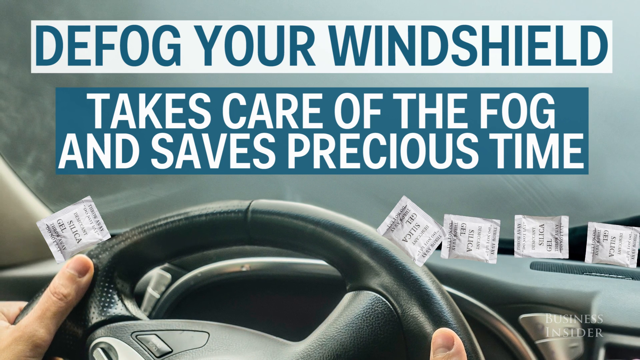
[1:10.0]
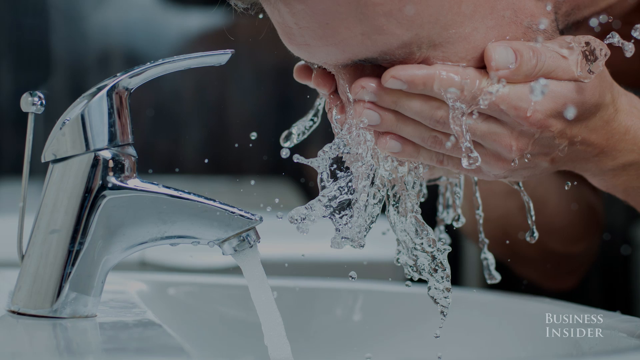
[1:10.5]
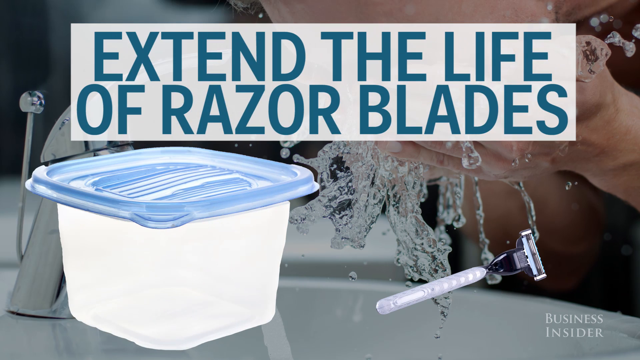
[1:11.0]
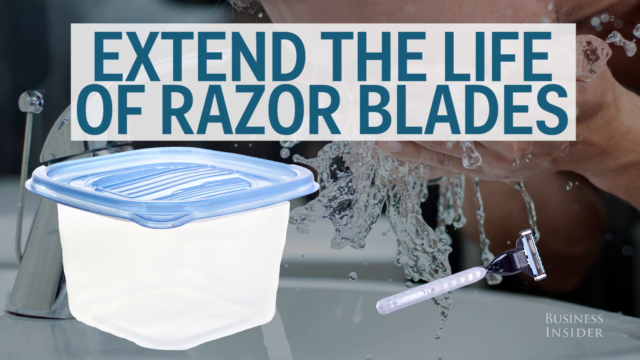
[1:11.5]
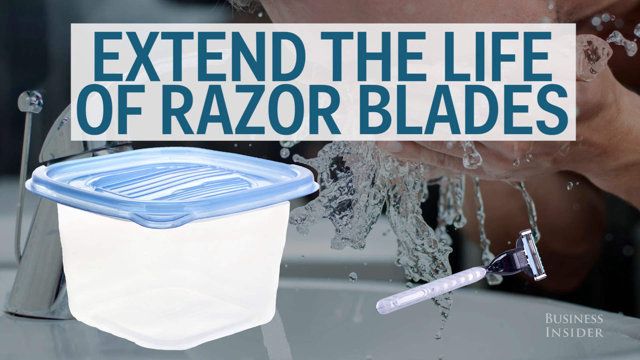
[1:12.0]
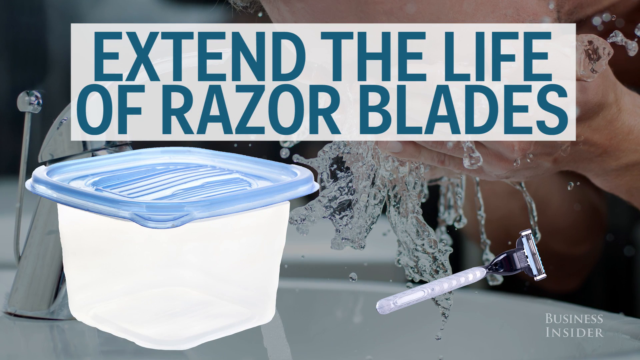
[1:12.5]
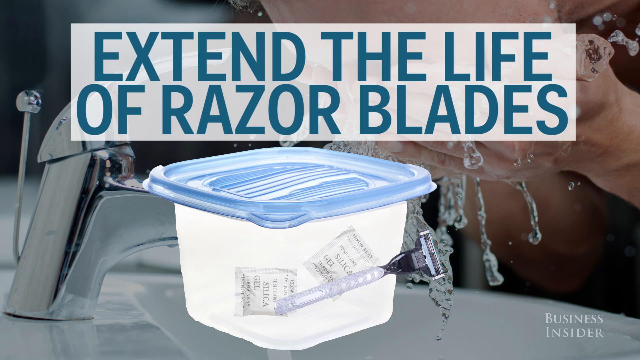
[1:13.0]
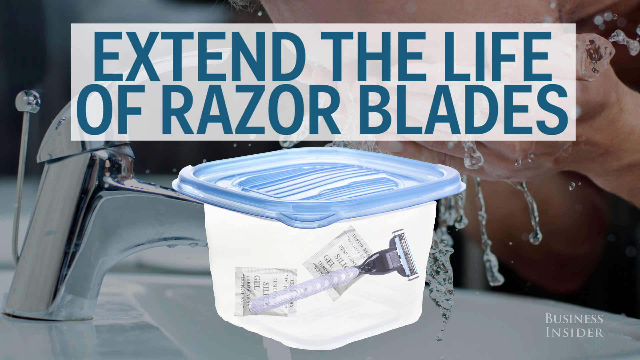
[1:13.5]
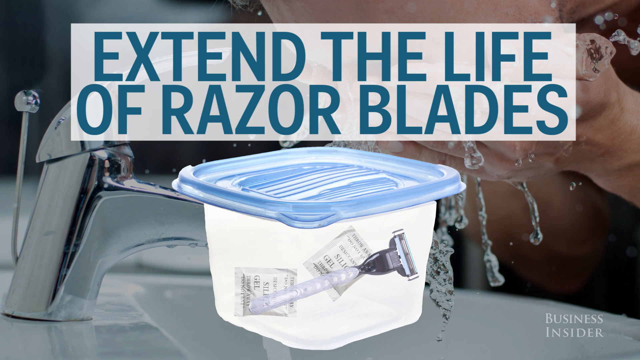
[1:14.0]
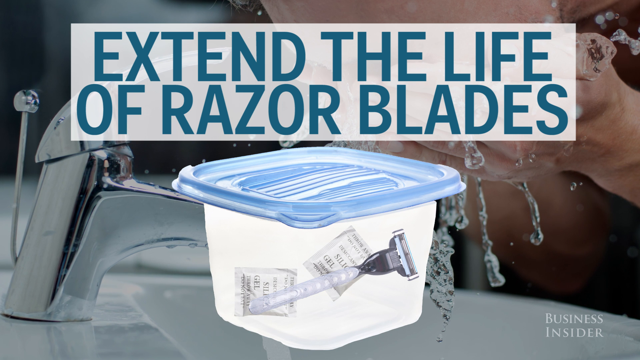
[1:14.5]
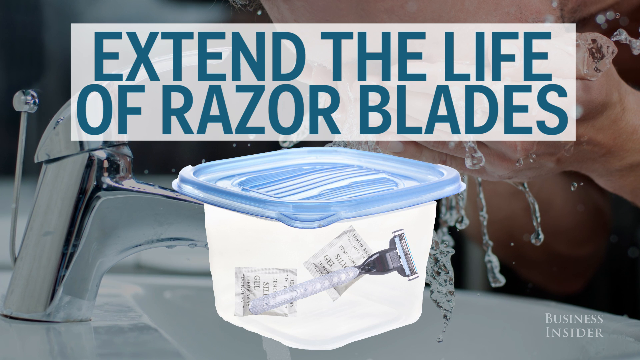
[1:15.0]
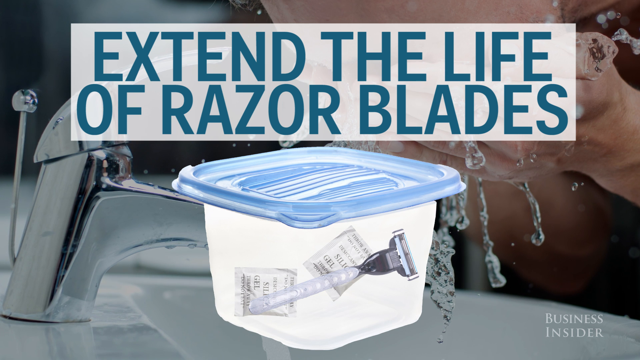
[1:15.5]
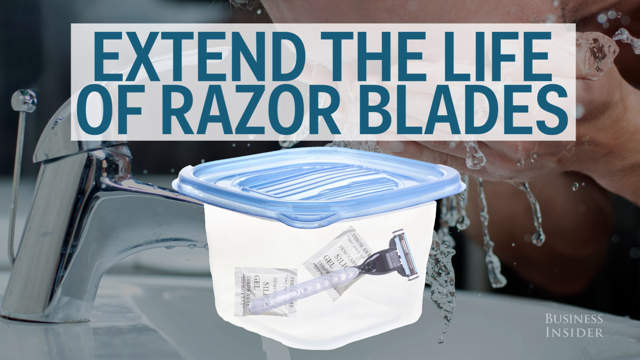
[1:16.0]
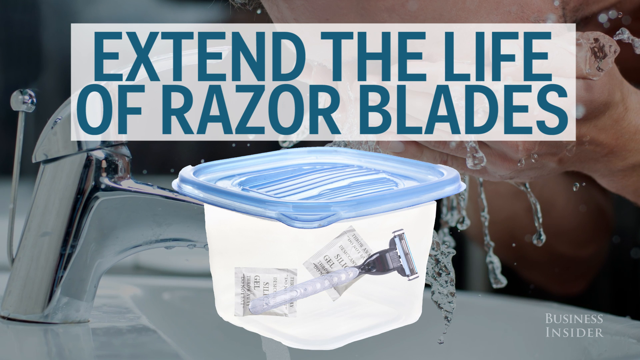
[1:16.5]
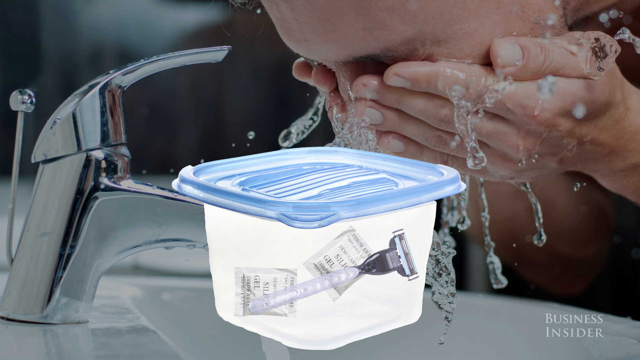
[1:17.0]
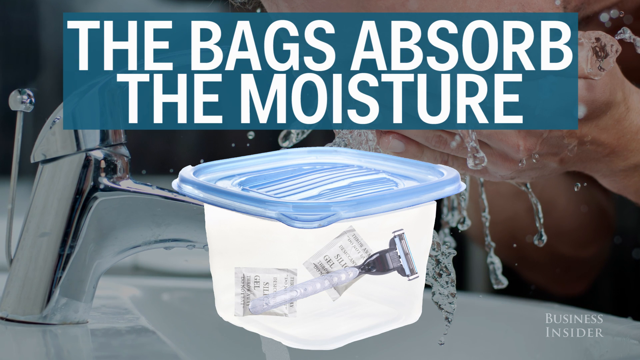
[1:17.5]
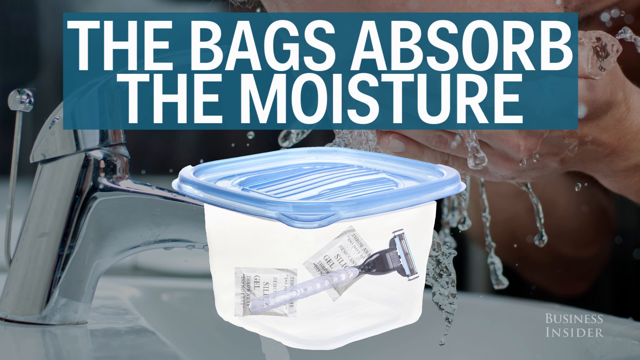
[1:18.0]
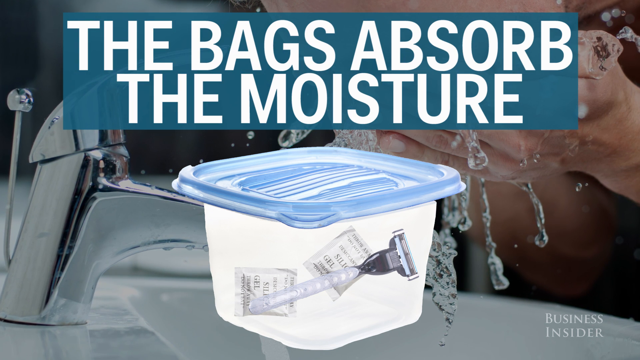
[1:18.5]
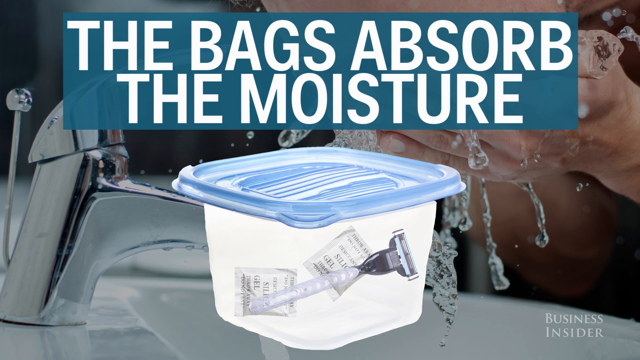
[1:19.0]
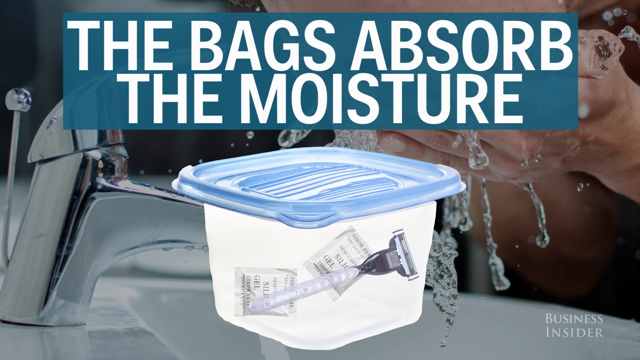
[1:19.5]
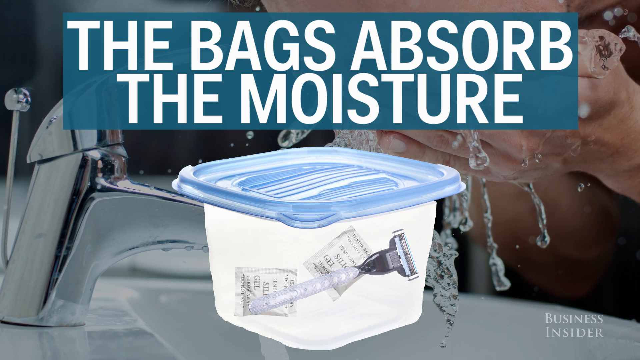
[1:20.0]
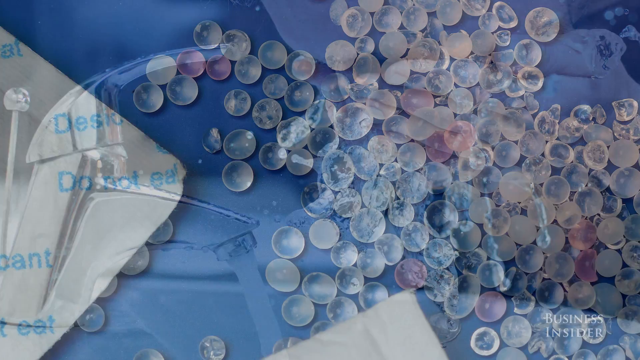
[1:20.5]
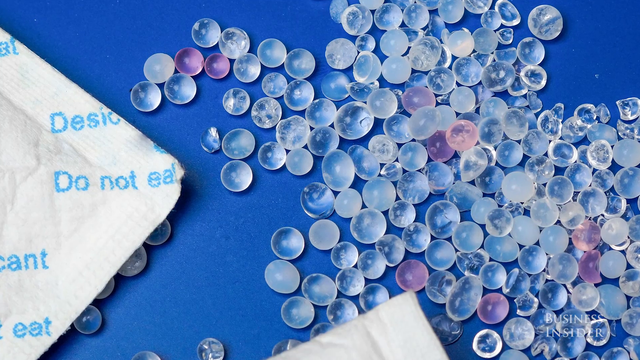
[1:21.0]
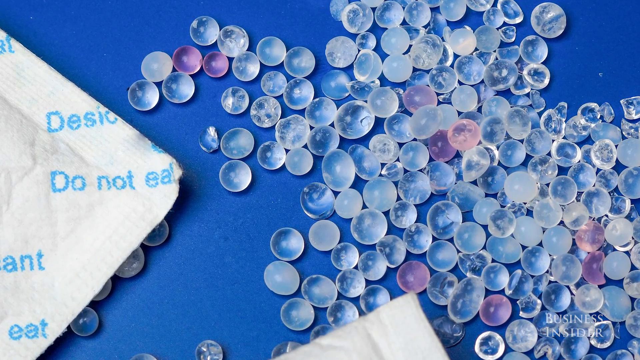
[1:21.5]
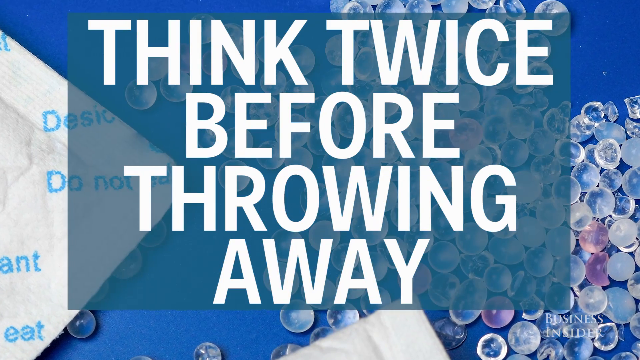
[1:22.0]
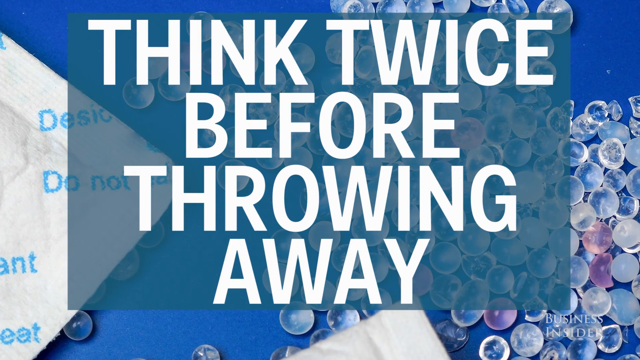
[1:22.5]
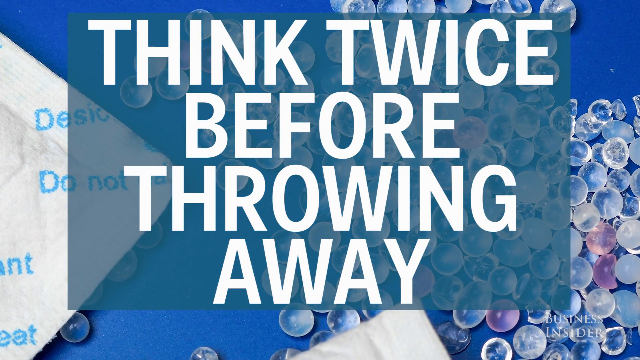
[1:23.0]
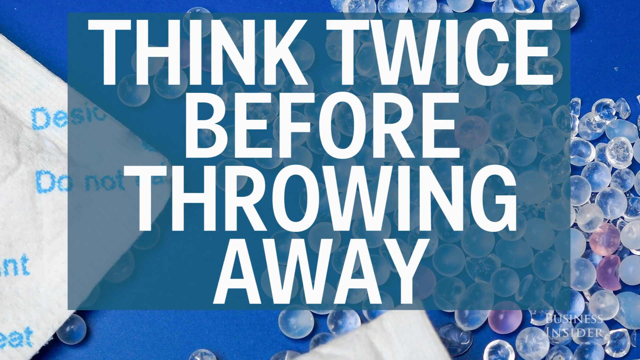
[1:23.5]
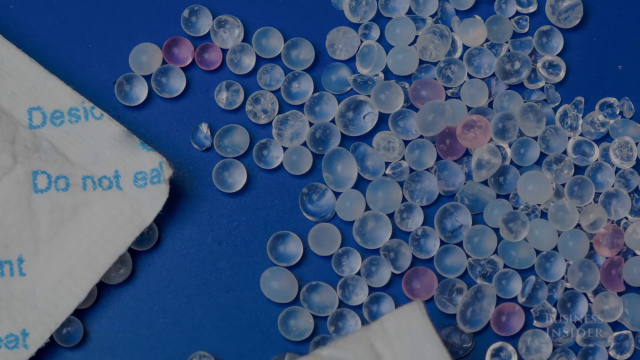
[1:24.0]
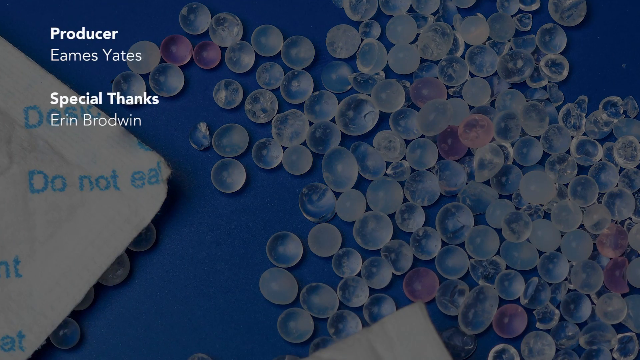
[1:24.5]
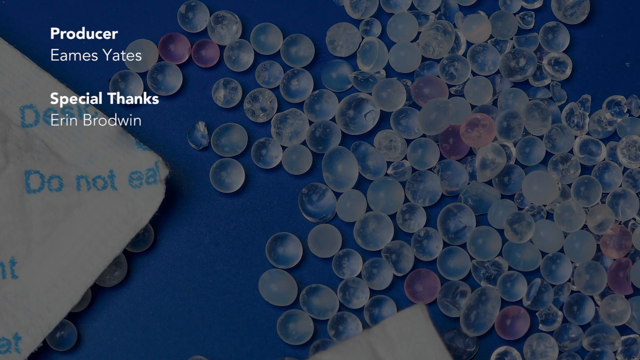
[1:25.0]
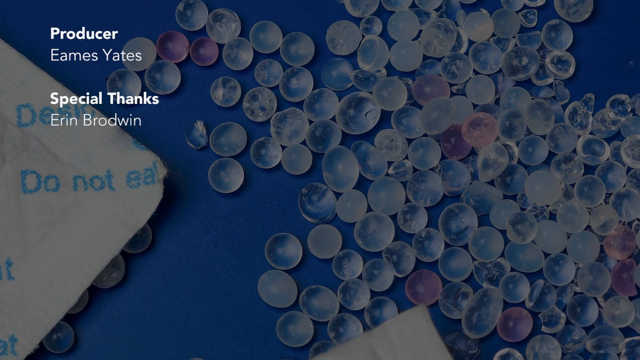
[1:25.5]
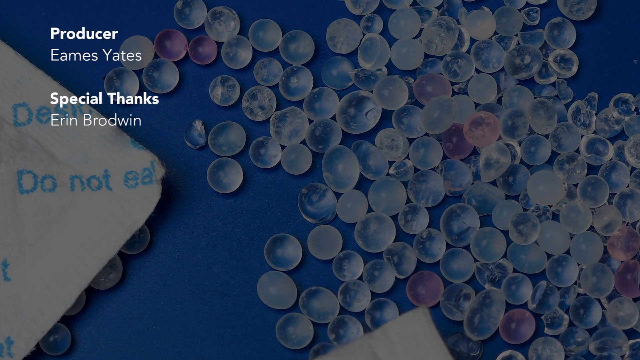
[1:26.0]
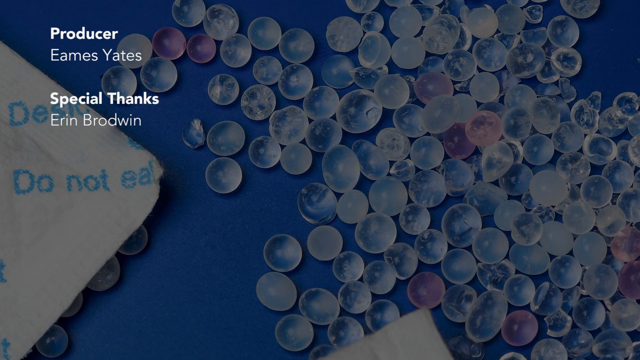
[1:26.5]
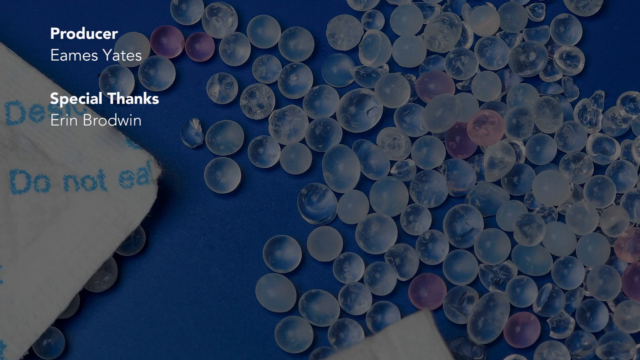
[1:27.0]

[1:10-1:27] The next example is extending the life of razor blades, illustrated with a visual of a container holding a razor and two silica bags, with a blue top sealing the container closed. The reason given is that the bags absorb the moisture. The video closes with a final directive to think twice before throwing away silica gels, and ends with a special thanks to a few people, apparently contributors to the video or the research behind it.